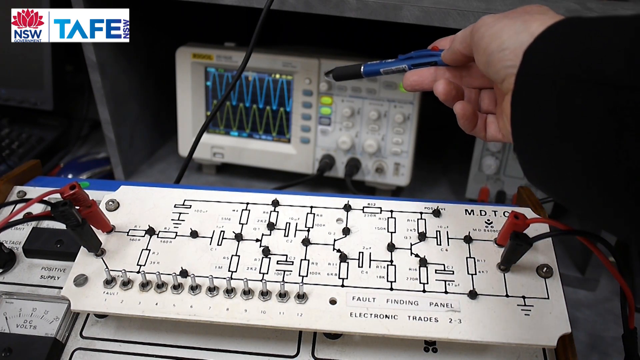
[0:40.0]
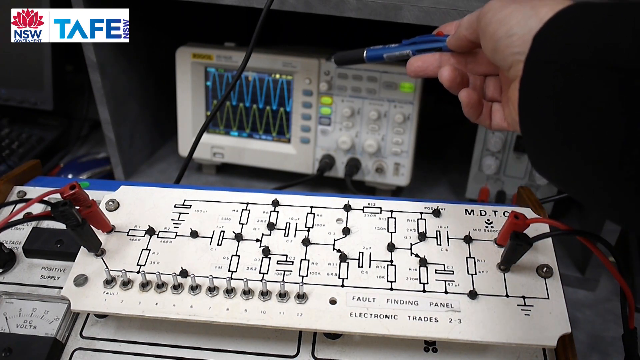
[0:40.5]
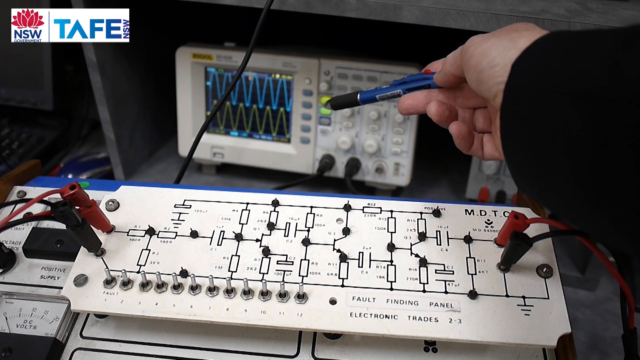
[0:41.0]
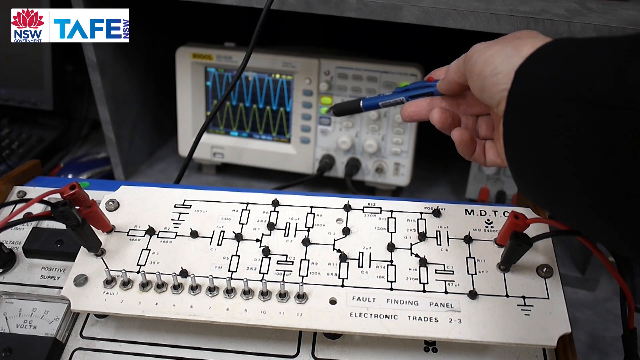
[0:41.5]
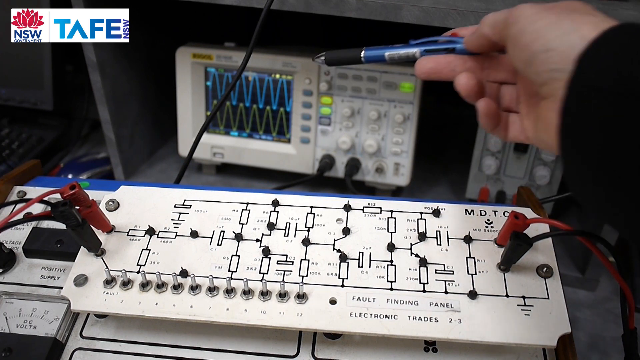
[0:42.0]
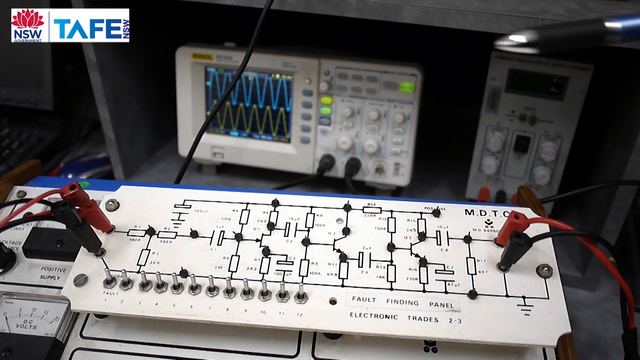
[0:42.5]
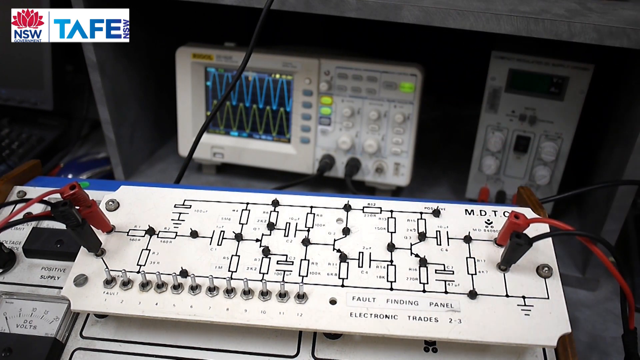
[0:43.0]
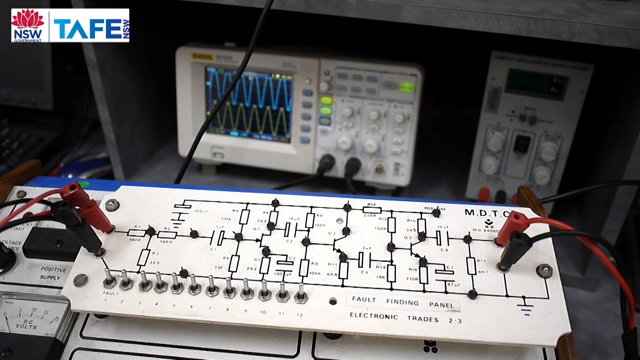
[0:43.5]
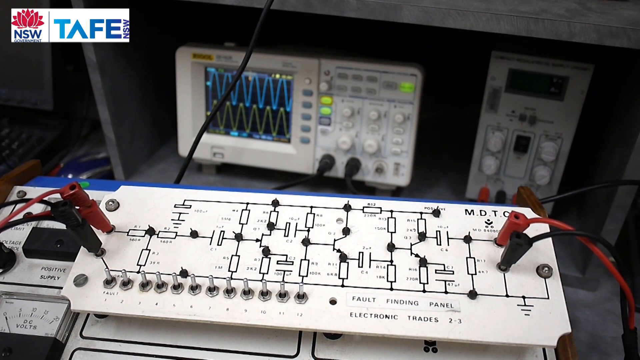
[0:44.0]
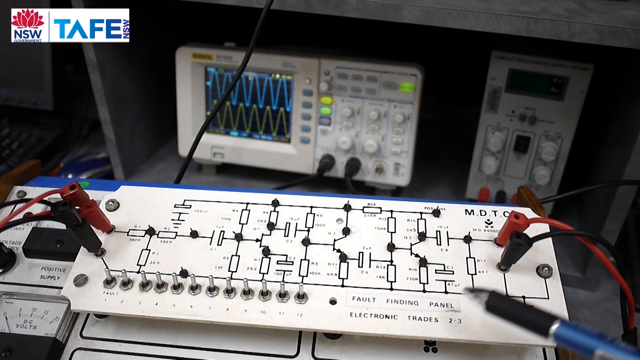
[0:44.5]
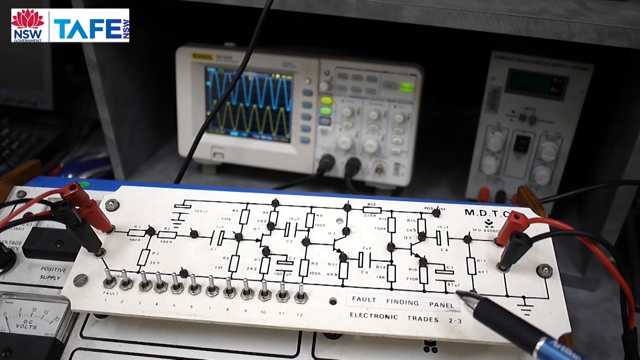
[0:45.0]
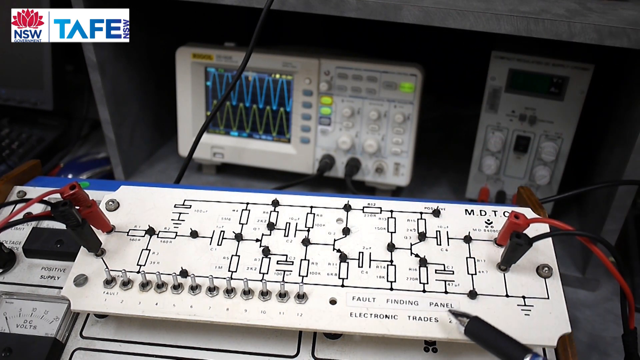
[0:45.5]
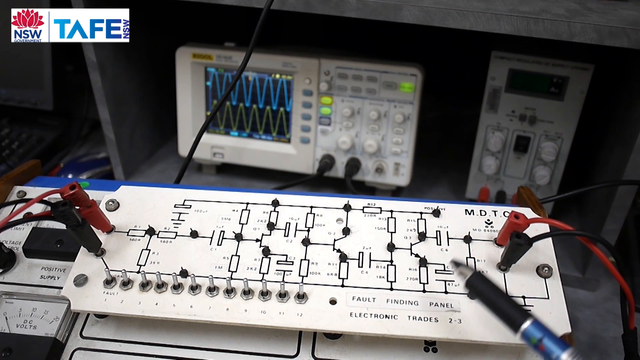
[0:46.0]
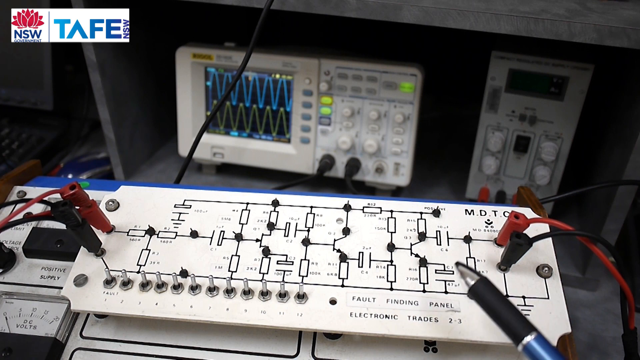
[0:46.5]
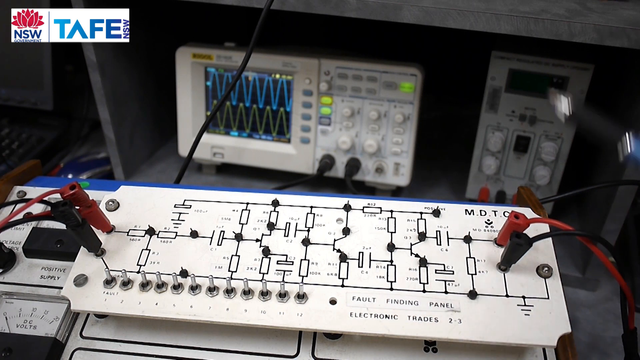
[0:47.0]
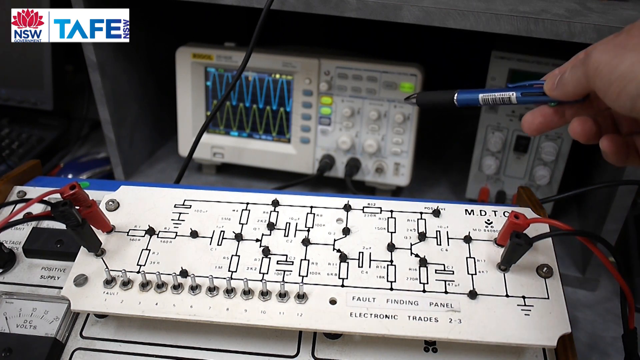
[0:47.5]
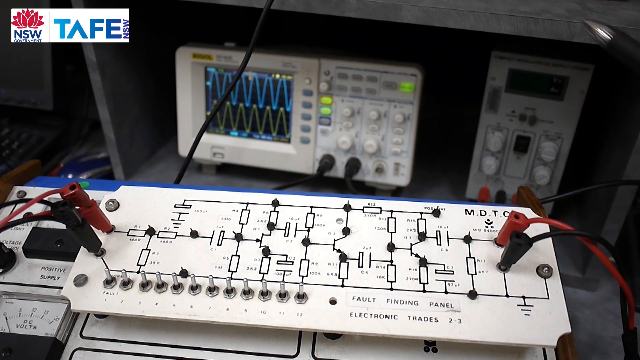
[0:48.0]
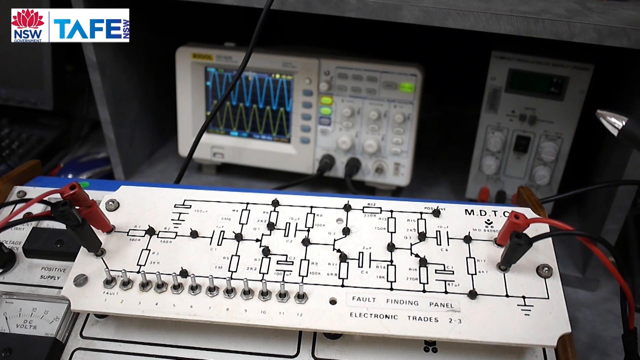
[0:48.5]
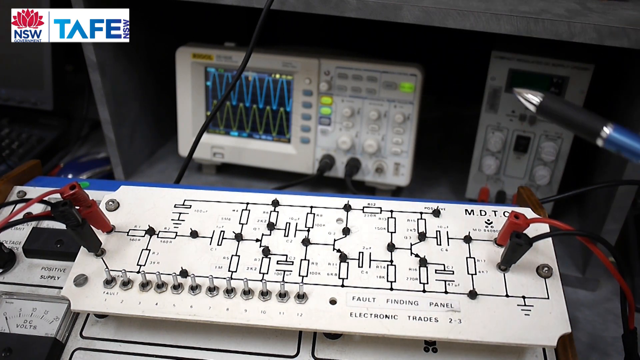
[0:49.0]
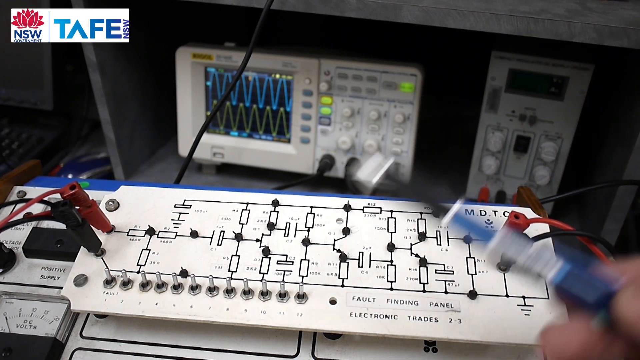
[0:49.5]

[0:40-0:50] A long rectangular white panel is on a desk of sorts. On the left, a red wire is inserted into an input at the top, and below it a black wire is plugged into another hole. The right side is exactly the same, with a red wire and a black wire plugged in. At the very top of the panel are the letters "M.D.T." followed by another letter that is either an O or a C. A person holds a blue ink pen with a black rubber grip and uses it to point to different things, including another white input box toward the back of the desk area. The hand then moves back to the larger panel down on the desk and moves the pen from one side to the other.